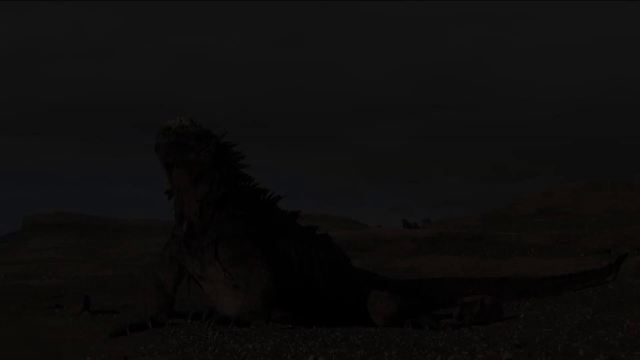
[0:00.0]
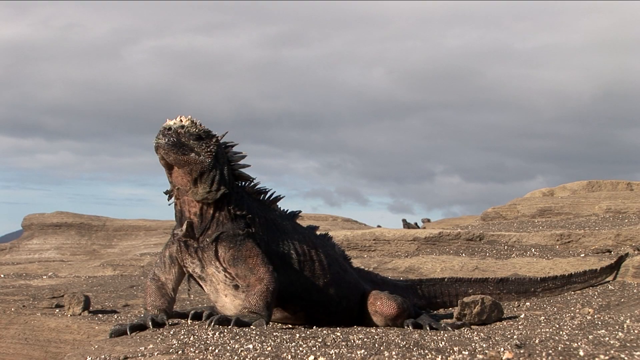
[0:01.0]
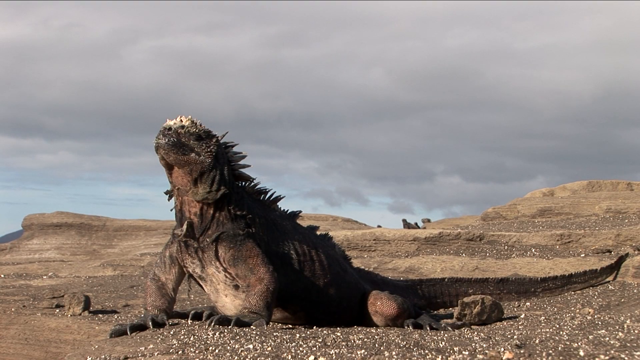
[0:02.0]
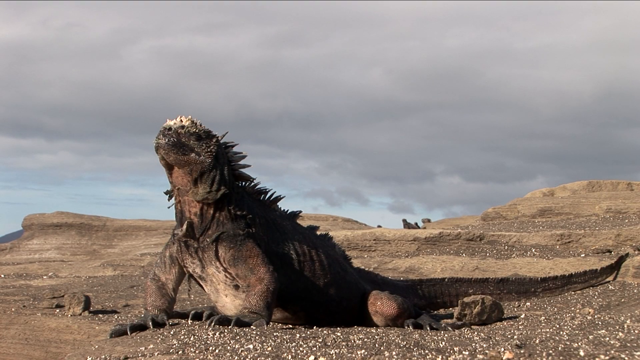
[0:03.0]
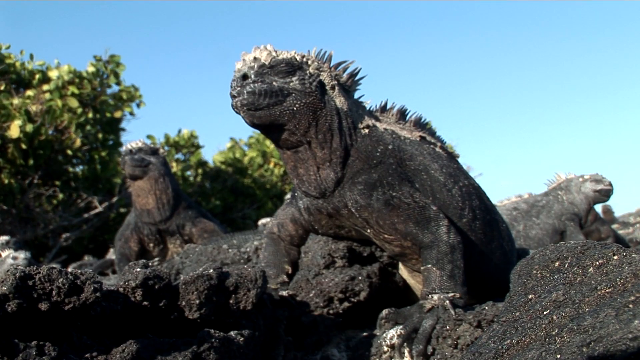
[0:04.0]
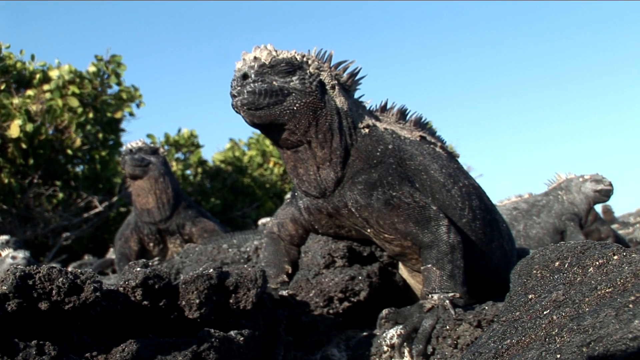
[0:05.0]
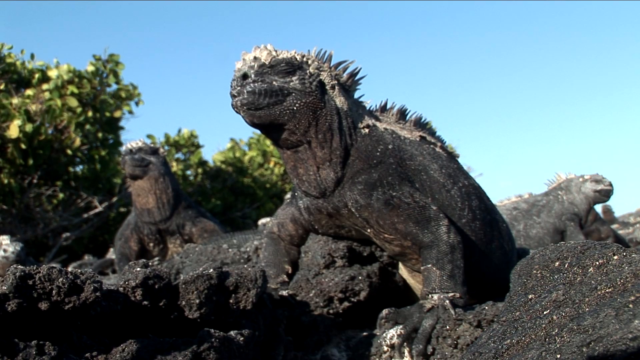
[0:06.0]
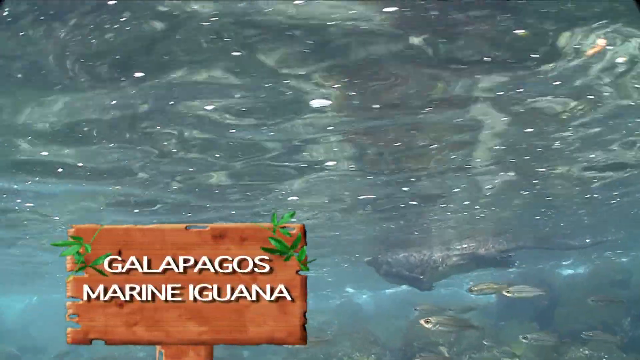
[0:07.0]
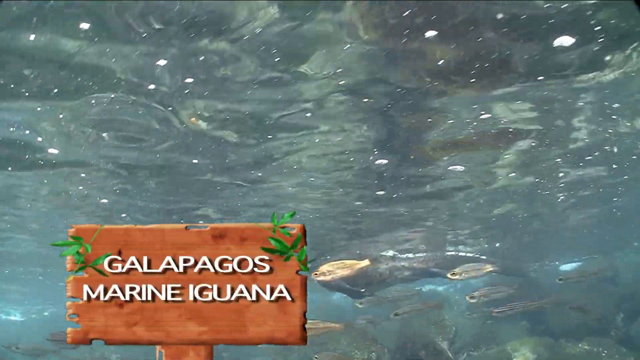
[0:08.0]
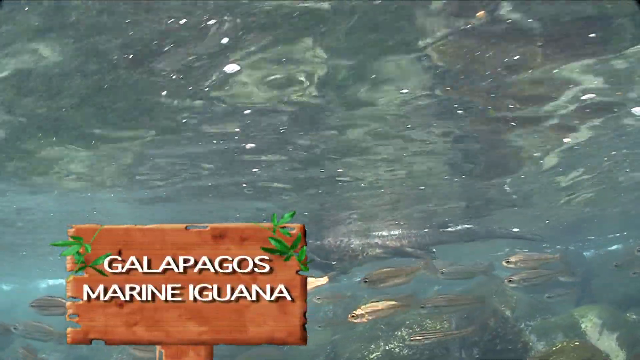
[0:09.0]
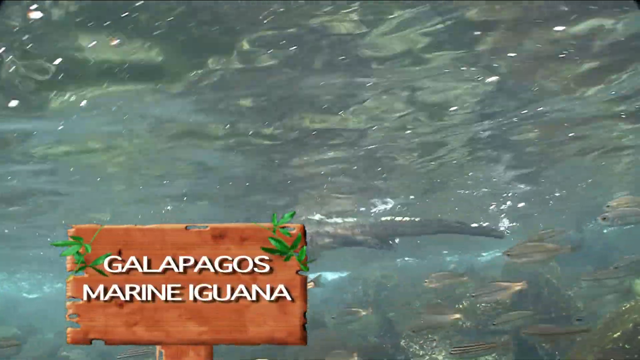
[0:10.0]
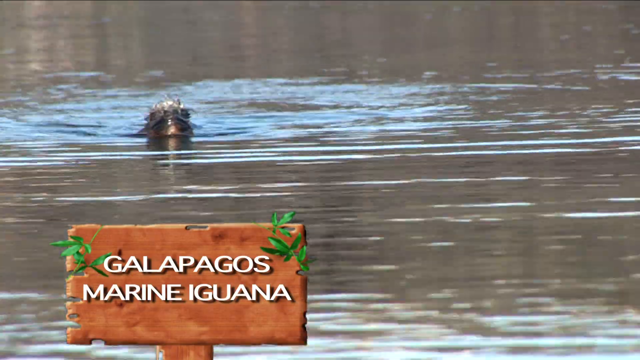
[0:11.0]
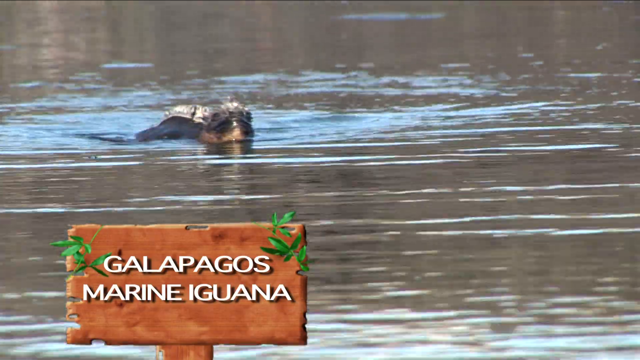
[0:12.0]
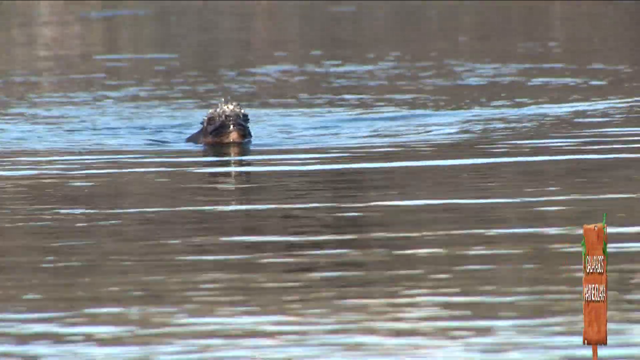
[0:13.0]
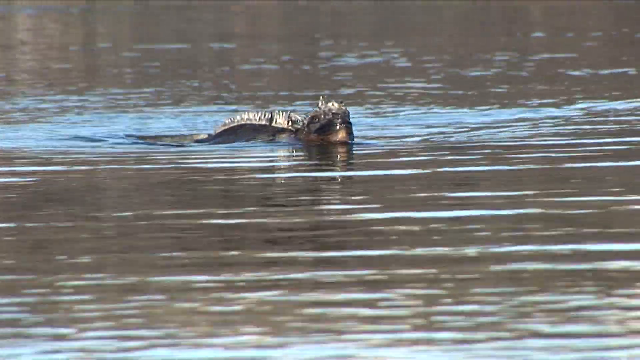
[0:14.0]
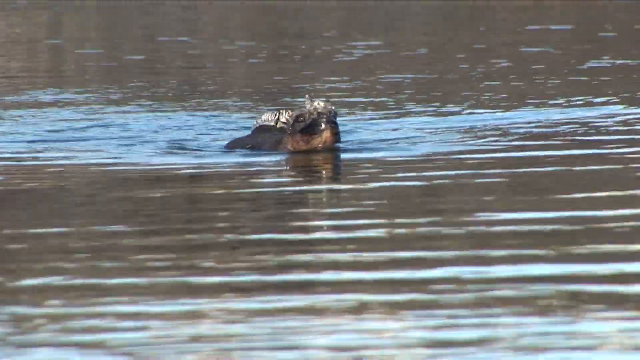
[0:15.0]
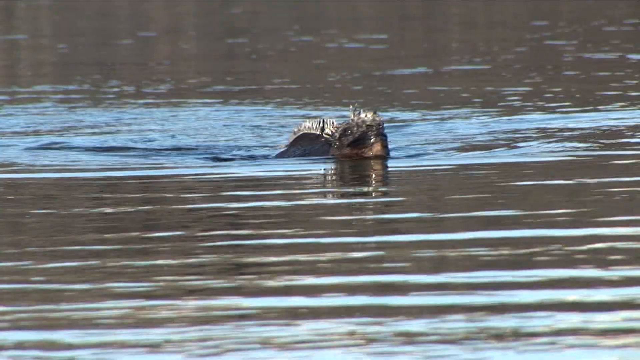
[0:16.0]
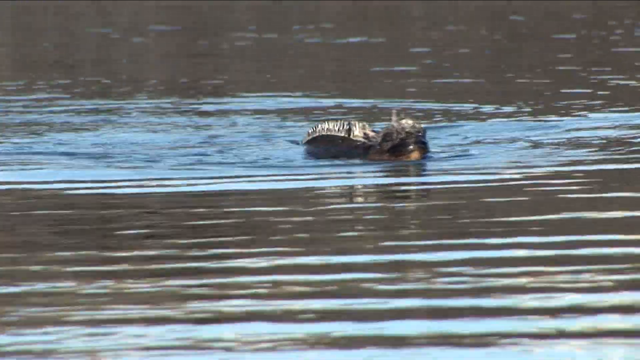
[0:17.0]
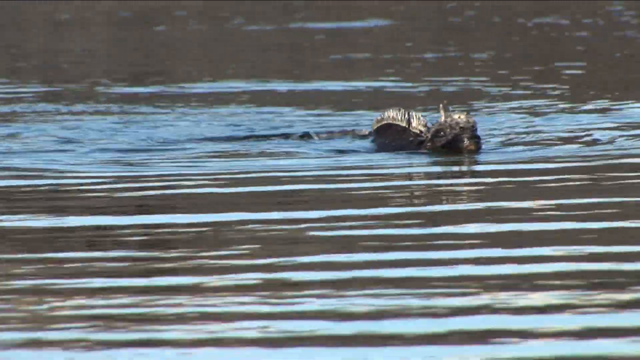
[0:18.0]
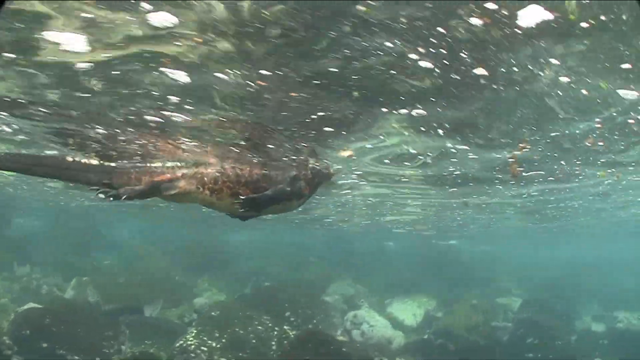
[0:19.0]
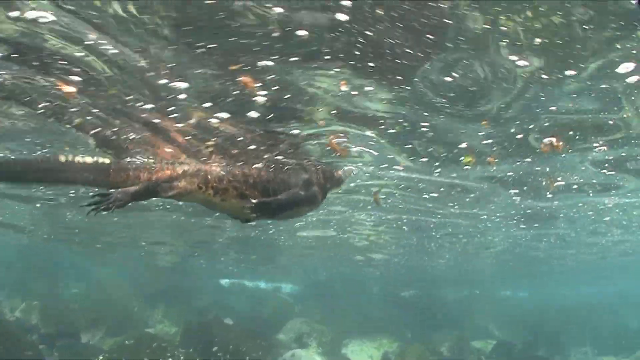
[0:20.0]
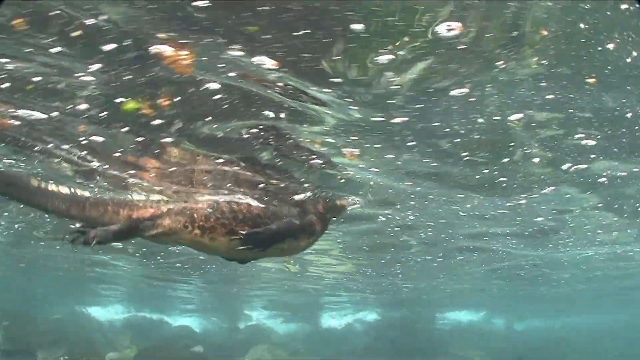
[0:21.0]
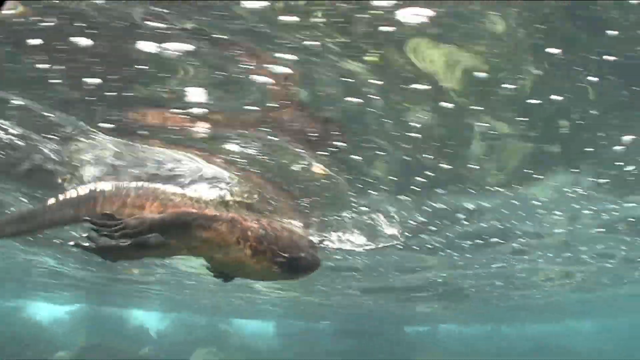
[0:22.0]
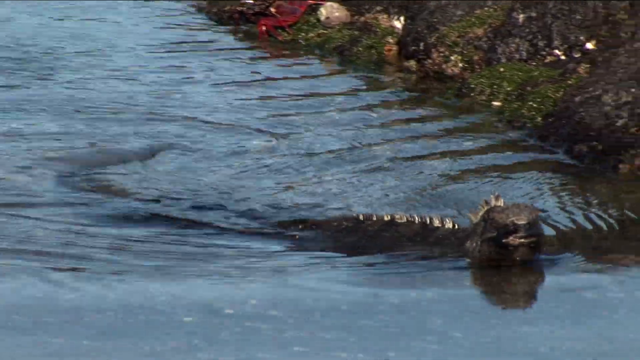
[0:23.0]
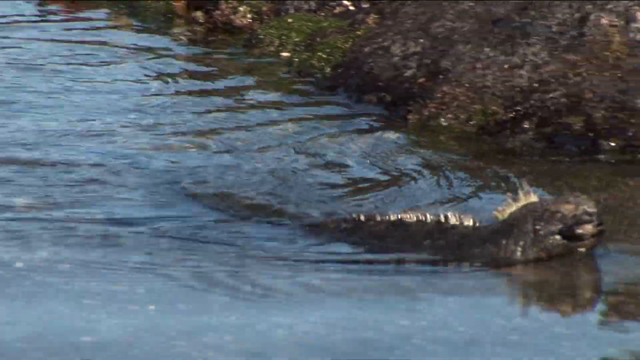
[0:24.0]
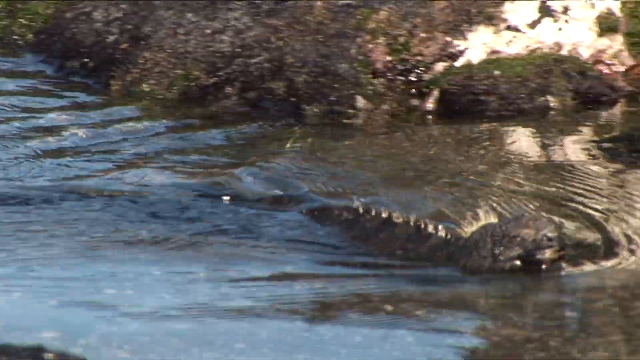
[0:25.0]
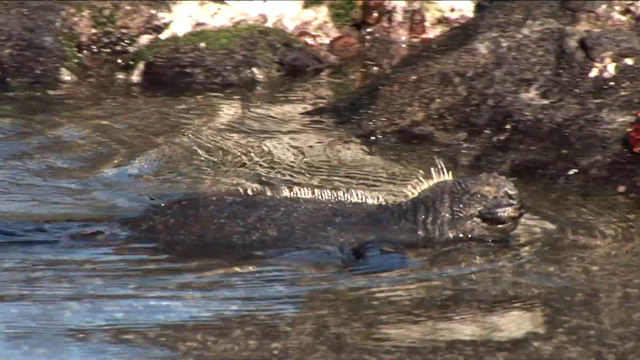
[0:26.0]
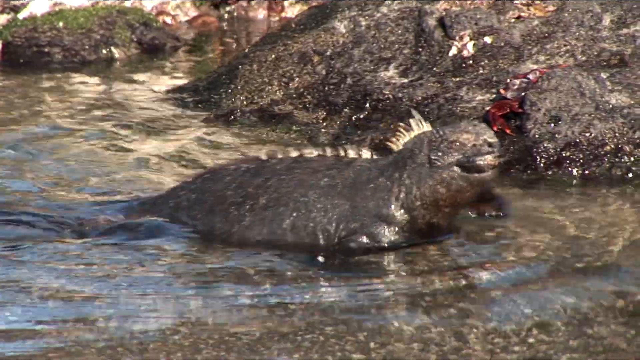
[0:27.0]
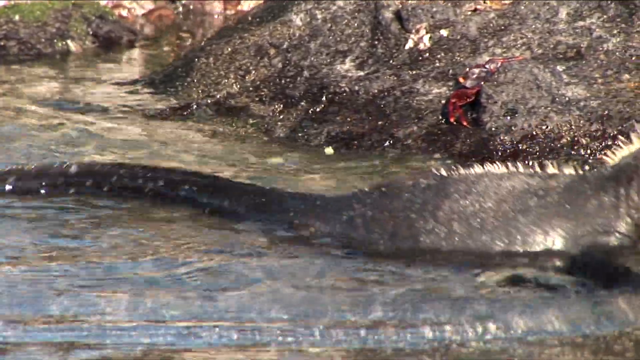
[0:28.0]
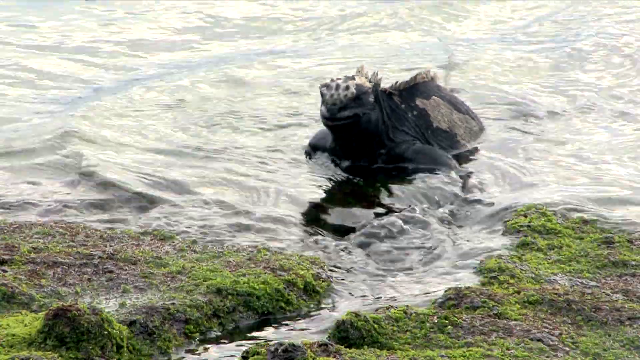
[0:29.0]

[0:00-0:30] A Galapagos marine iguana swims in a river in its natural habitat, moving around in a stream as the setting changes to different parts of the area. The main subject is the iguana; there are a few iguanas, one to three. In one shot some fish swim underneath the iguana, but the main focus is one iguana swimming around. There are dark rocks, and the iguana is seen sunbathing on a sandy, dry area and then, on the other side, sunbathing on rocks. Its tail moves in a swift motion as it swims in the water, and its arms and hands move slowly forward one by one. The scenery changes from dry land to dark, wet land and into a river, with smooth transitions between each.